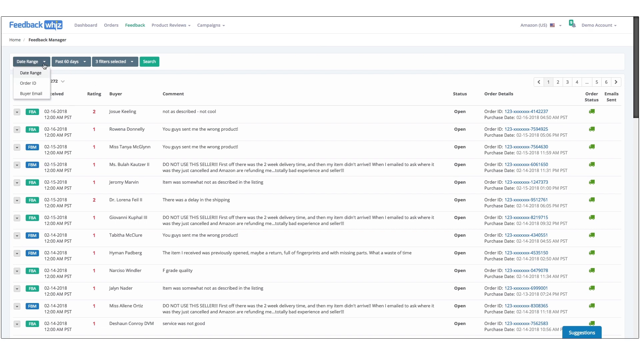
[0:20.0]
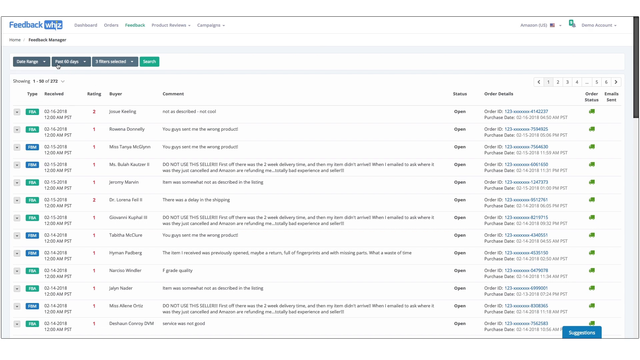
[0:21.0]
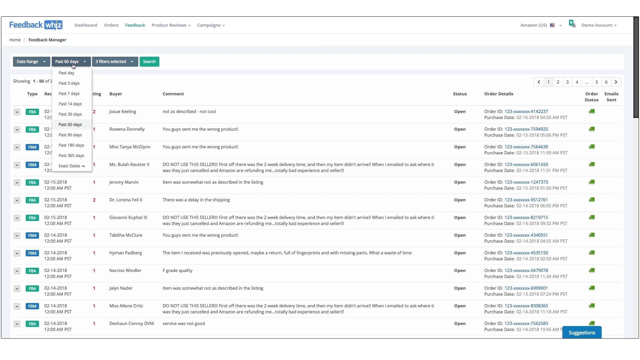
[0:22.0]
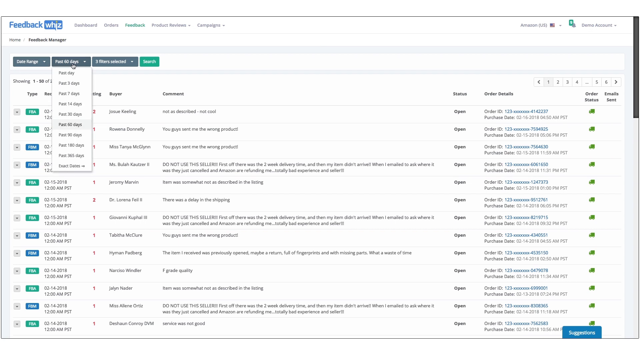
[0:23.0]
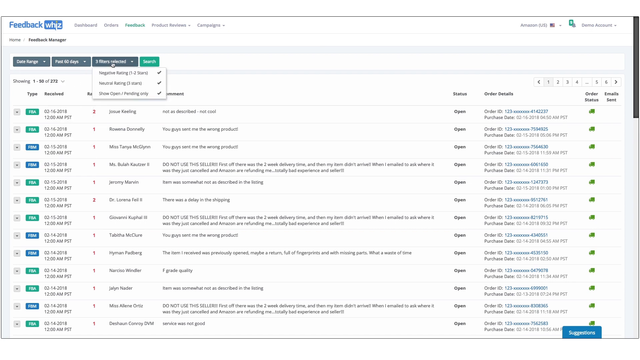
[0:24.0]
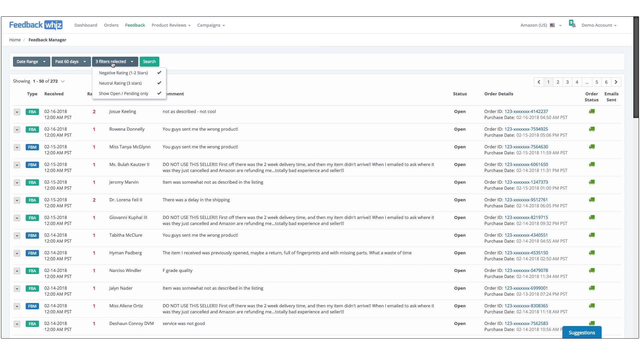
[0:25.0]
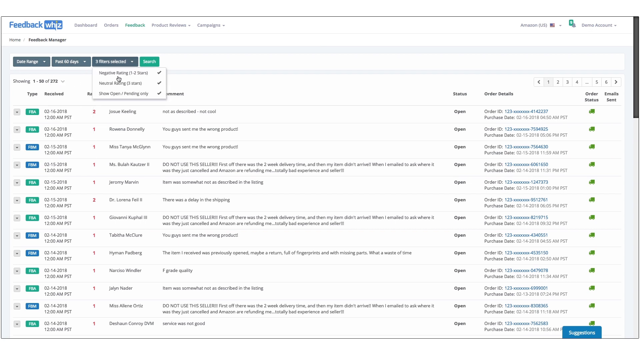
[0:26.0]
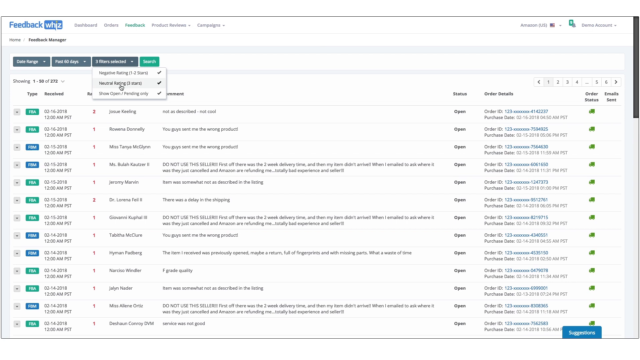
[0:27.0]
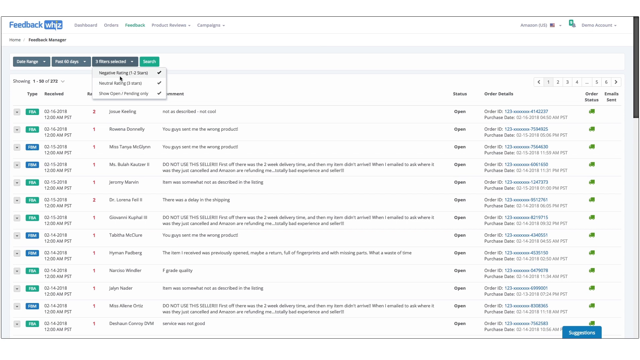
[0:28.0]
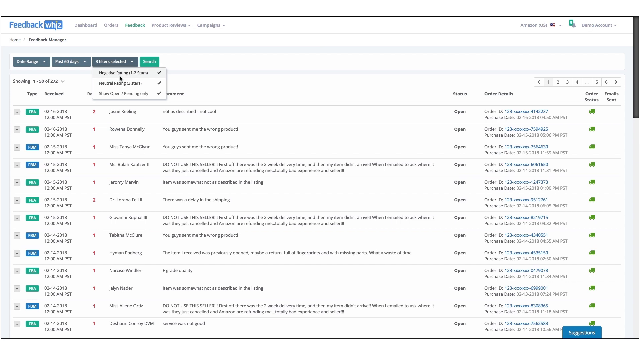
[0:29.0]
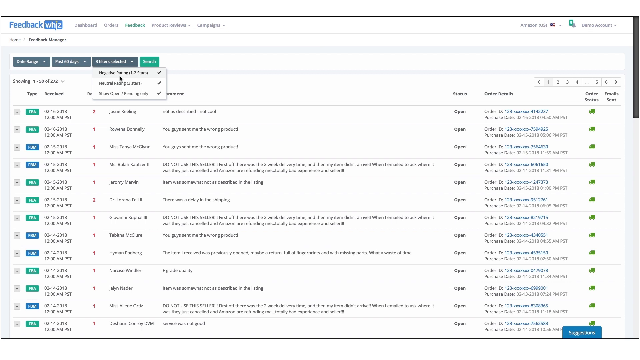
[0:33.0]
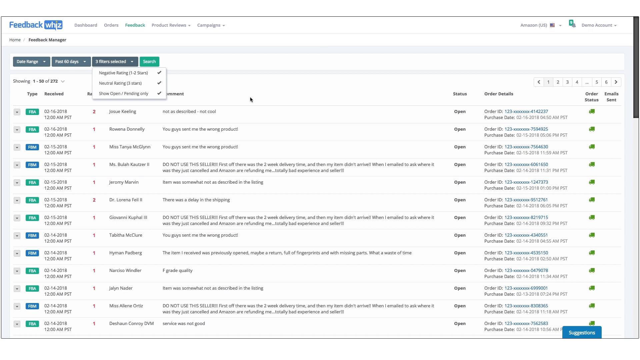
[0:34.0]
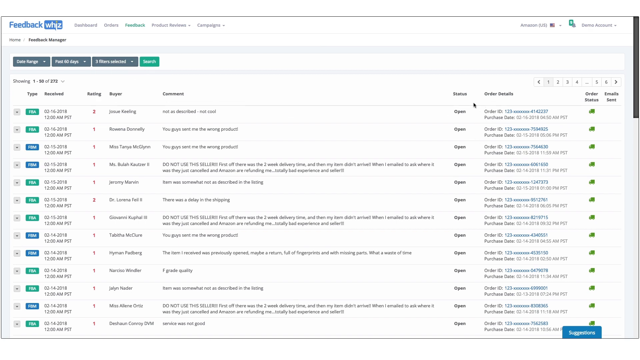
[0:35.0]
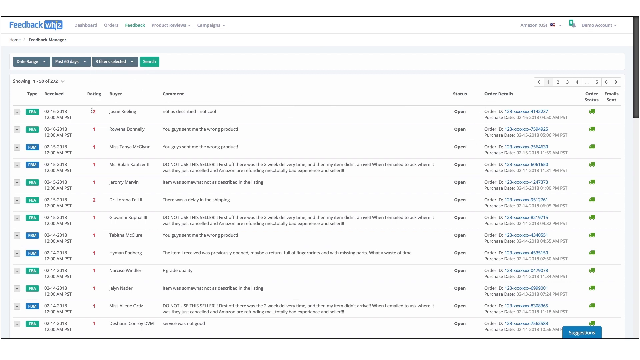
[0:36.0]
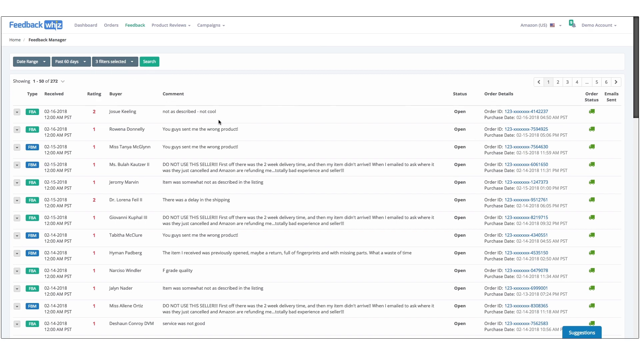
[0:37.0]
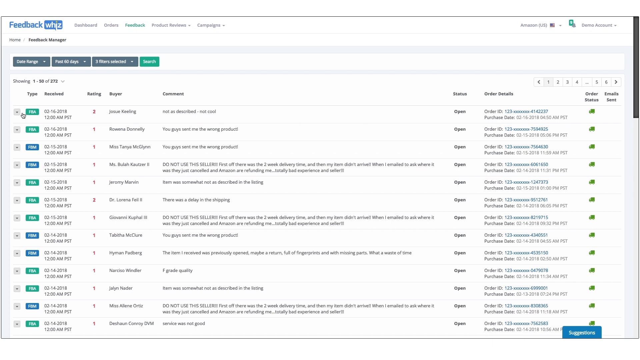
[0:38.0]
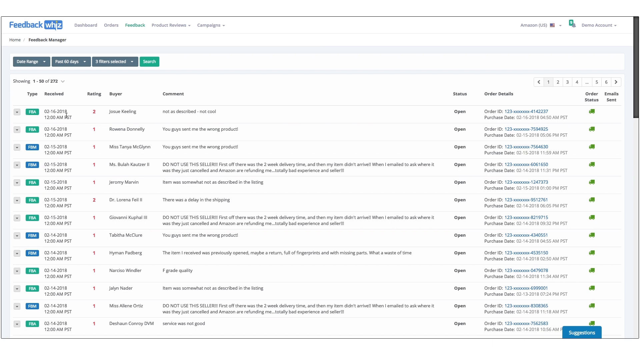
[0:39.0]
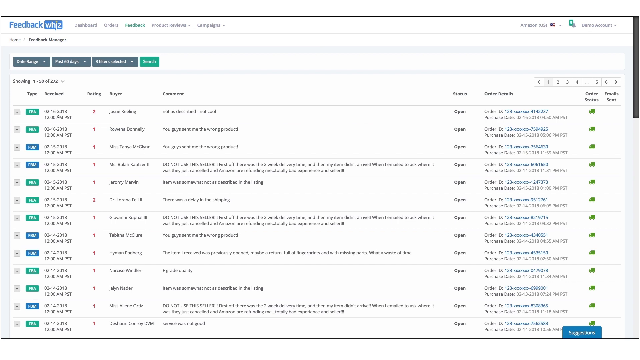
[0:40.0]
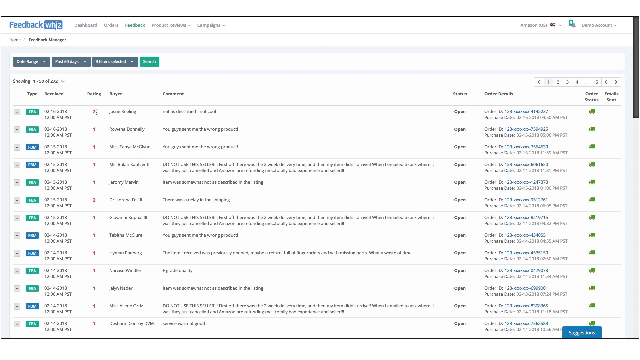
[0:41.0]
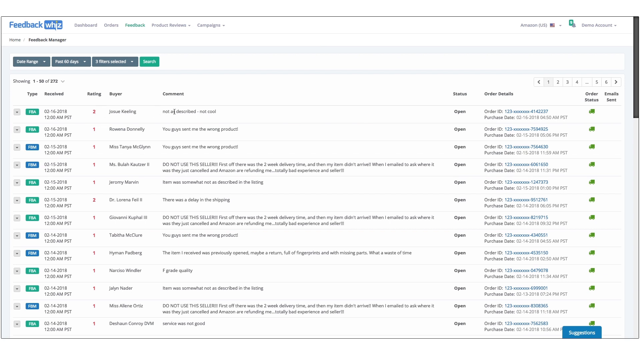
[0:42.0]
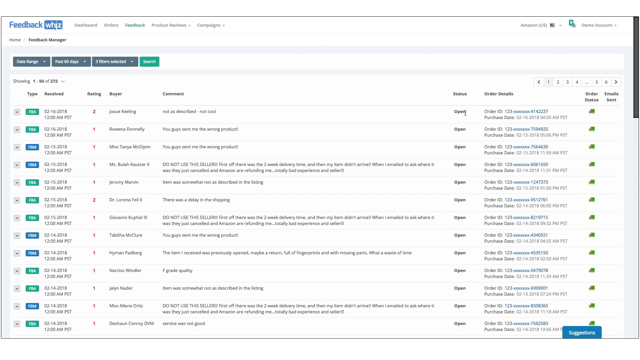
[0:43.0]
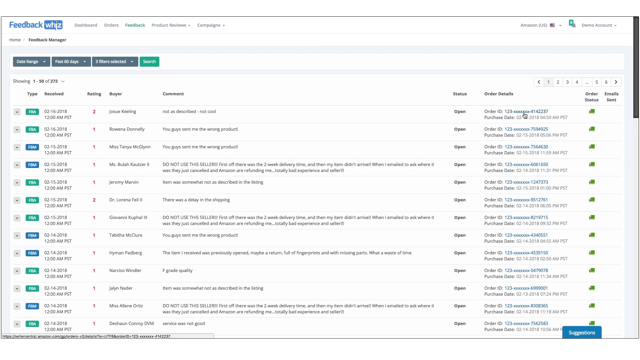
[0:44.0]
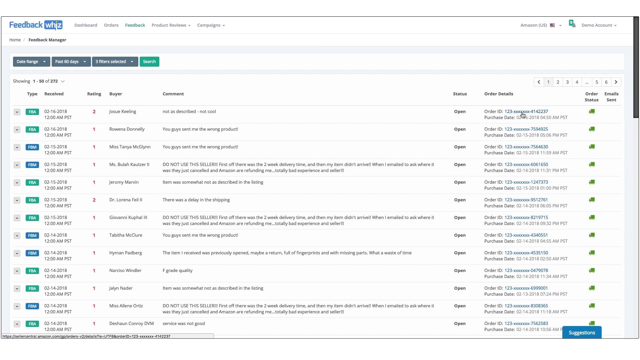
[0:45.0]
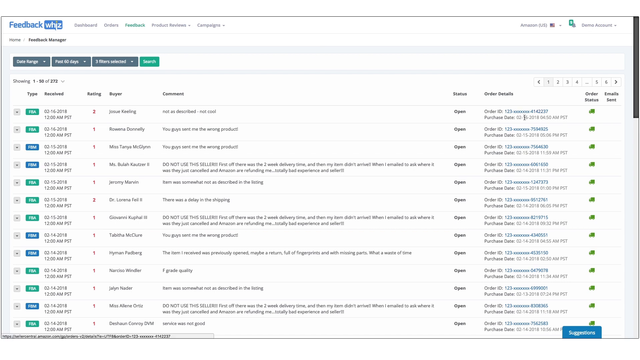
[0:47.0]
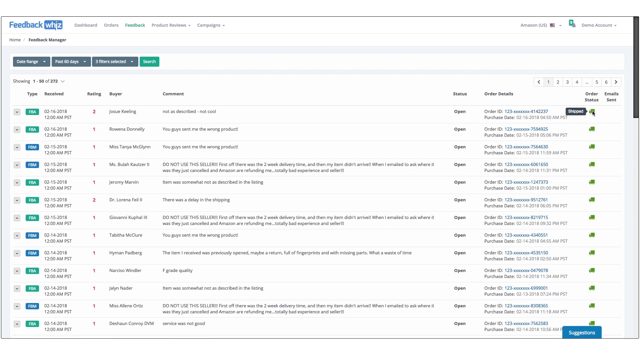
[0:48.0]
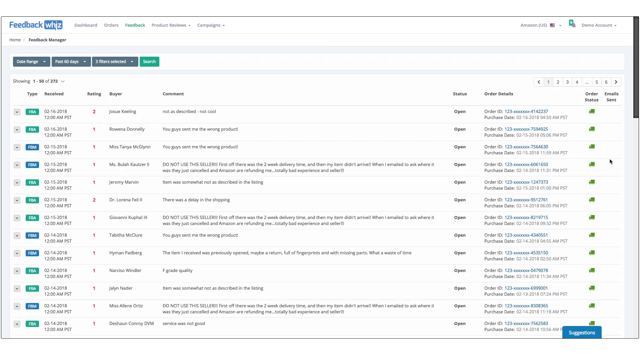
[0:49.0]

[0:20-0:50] An order summary in the software system is shown, somewhat blurry and hard to see. There are filters, including a date range of past 60 days, and probably filters by buyer or type. It seems almost like a demo, with the mouse moving across the screen. Menu options include dashboard, orders, feedback, product reviews and campaigns. A home screen and the feedback manager appear; the feedback manager screen holds a large amount of information.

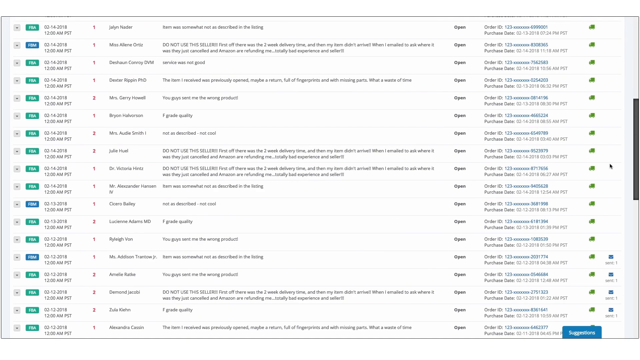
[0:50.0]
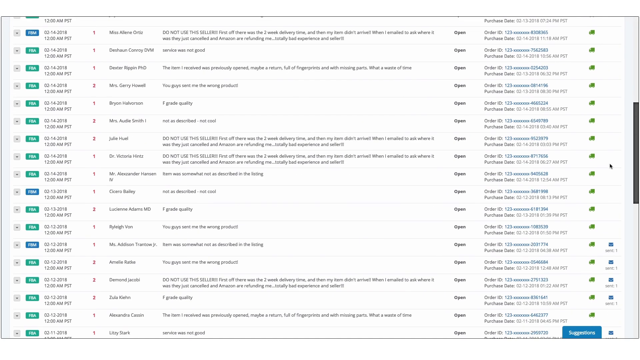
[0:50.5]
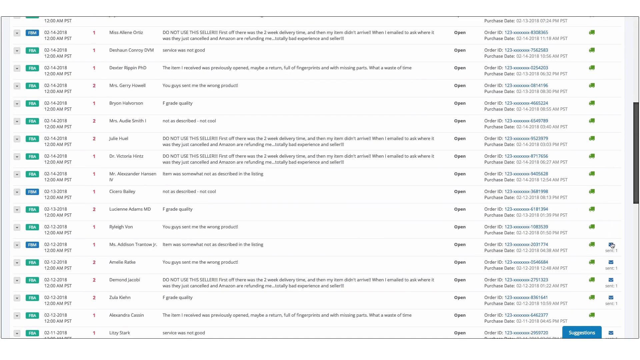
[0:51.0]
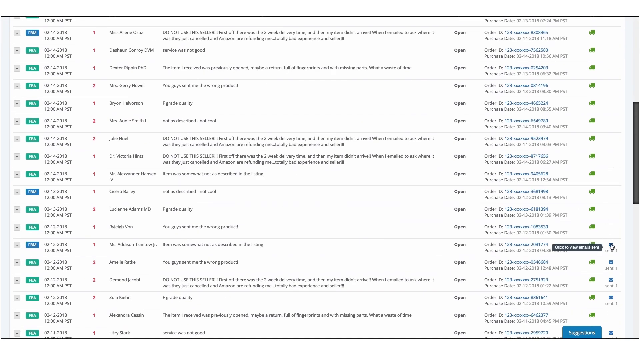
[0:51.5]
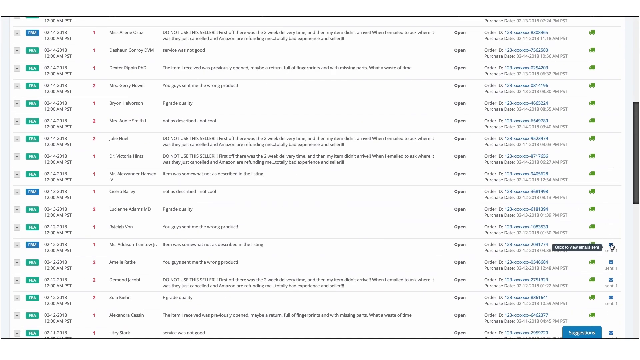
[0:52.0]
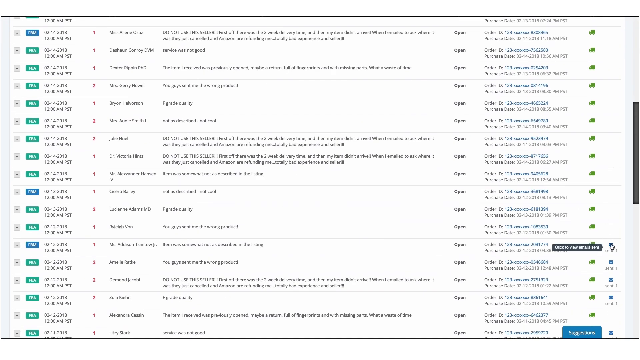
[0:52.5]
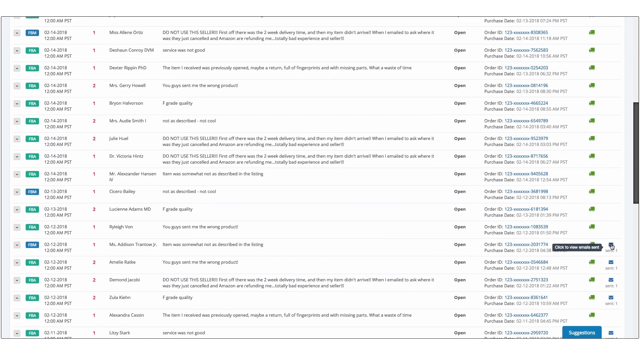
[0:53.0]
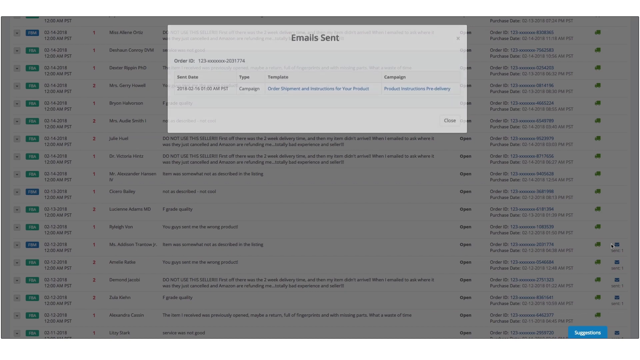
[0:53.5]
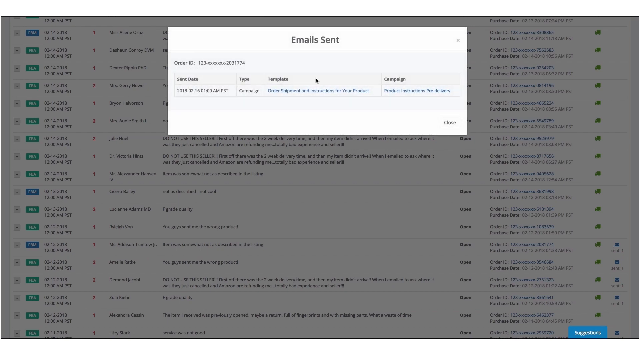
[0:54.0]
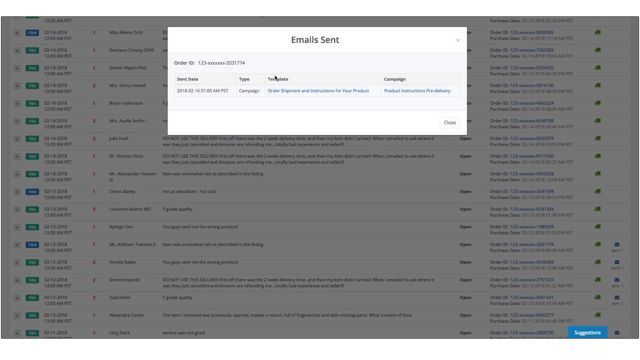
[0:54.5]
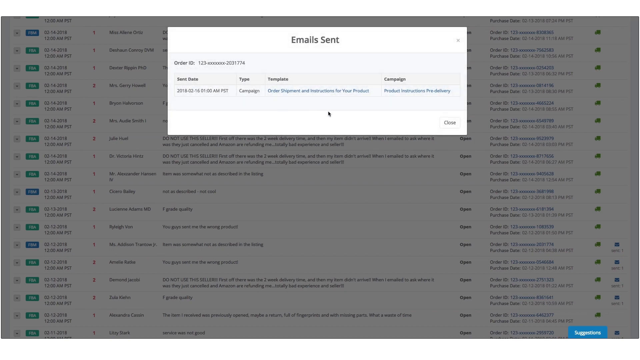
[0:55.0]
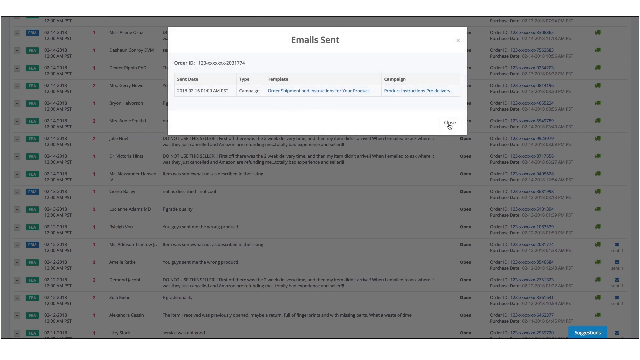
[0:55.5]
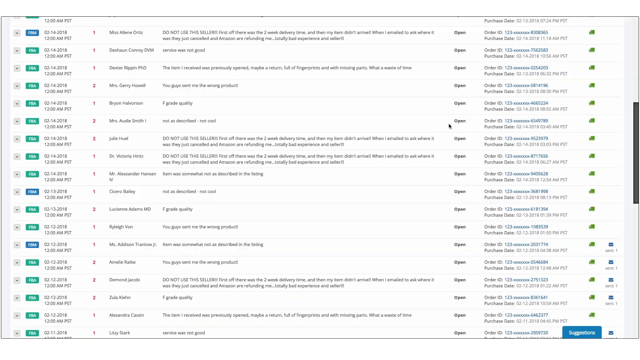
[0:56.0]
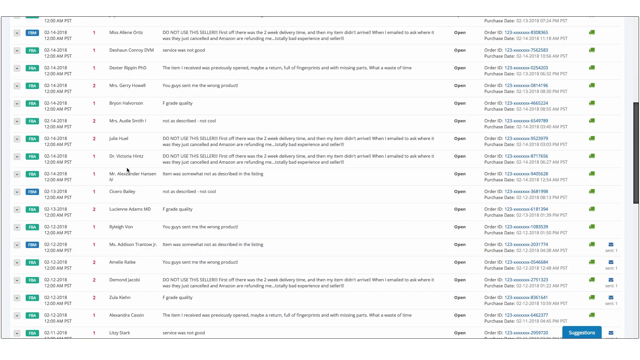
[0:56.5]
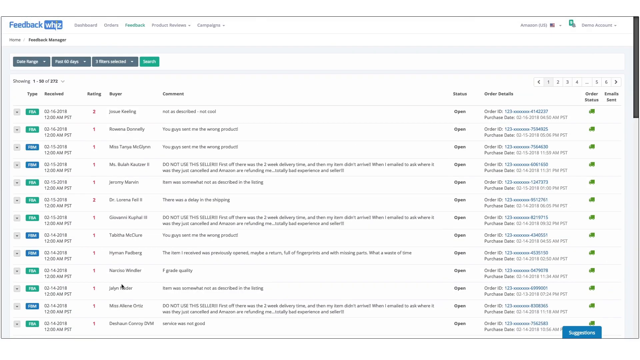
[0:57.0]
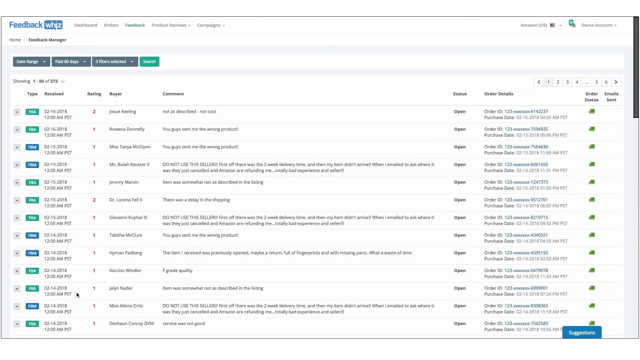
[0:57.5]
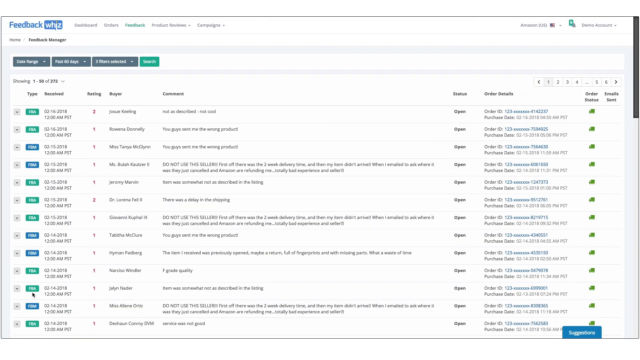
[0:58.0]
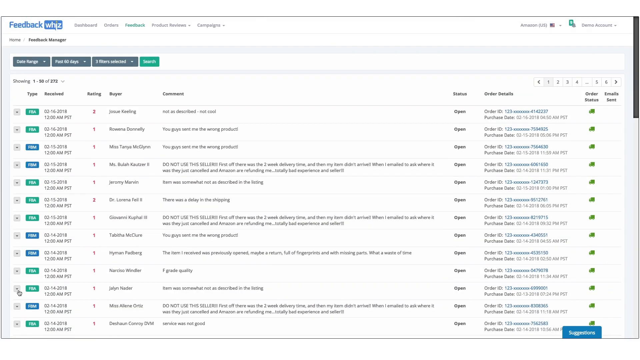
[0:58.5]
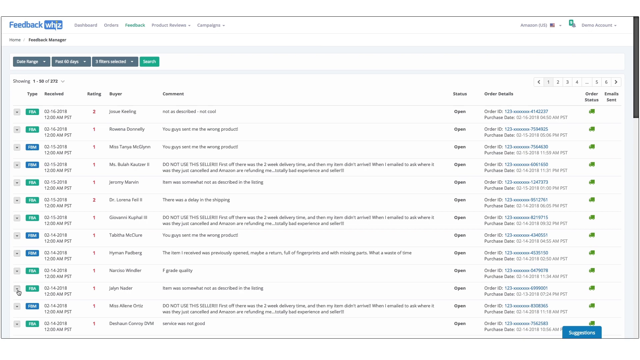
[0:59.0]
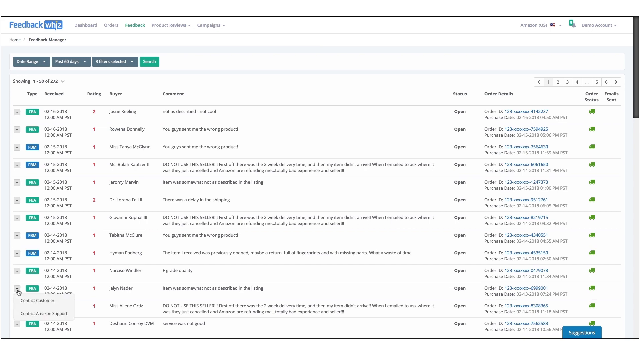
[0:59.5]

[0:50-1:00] The software program shows emails sent and different options. Individual orders are clicked, and there appears to be a contact the customer option for sending emails, with a history of sent emails on the right-hand side. The order number is shown along with the type, ratings, and the date each email was sent. A cursor moves over the screen as if in a demo.